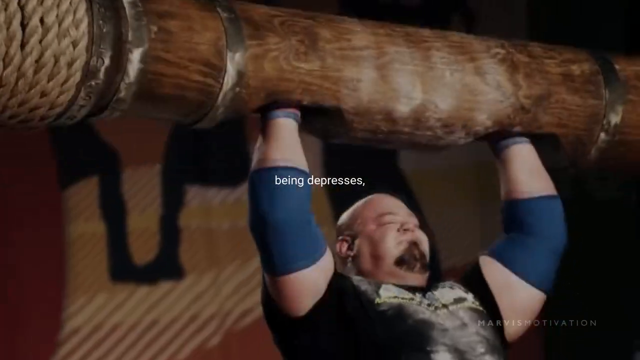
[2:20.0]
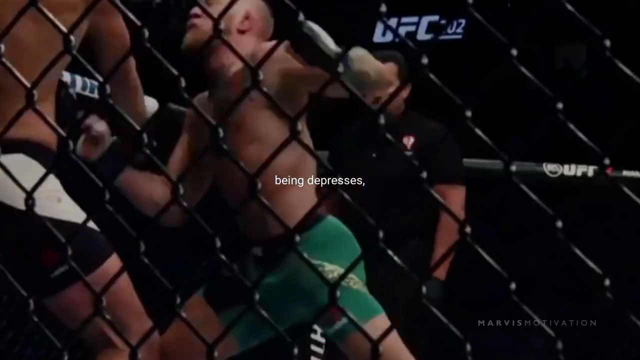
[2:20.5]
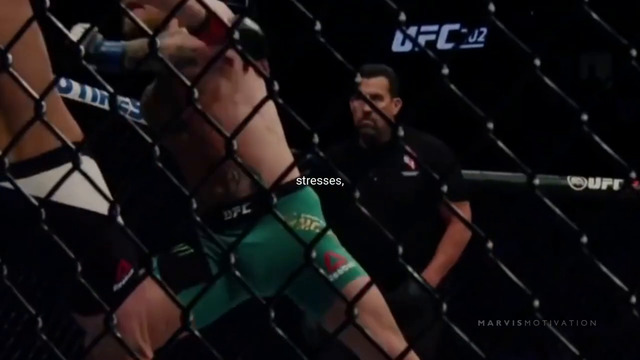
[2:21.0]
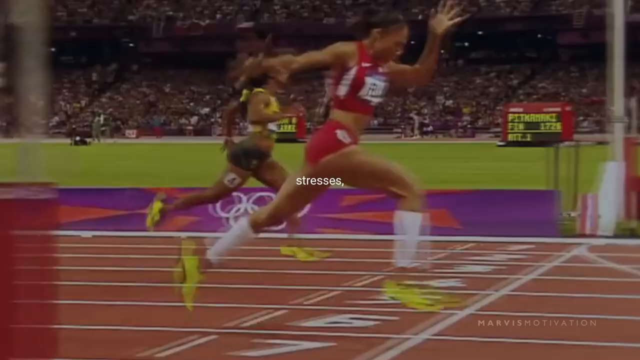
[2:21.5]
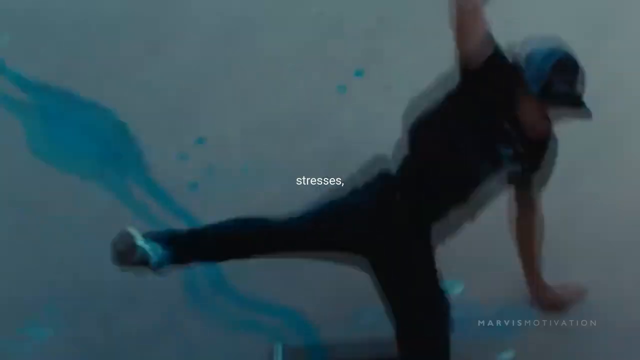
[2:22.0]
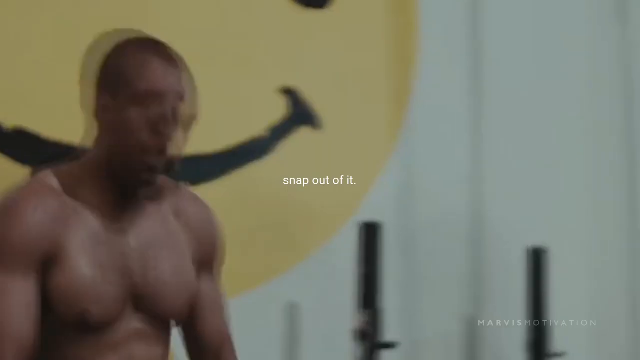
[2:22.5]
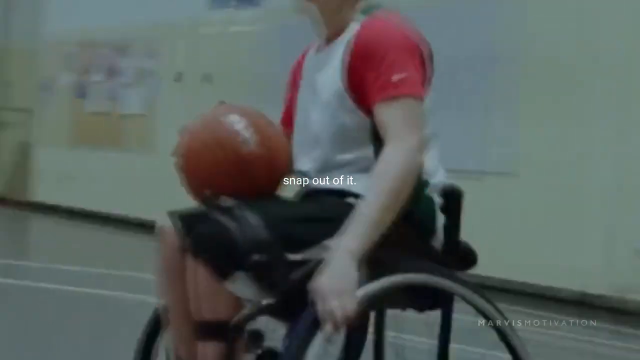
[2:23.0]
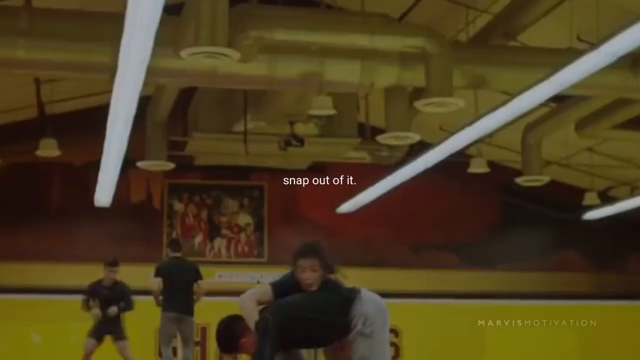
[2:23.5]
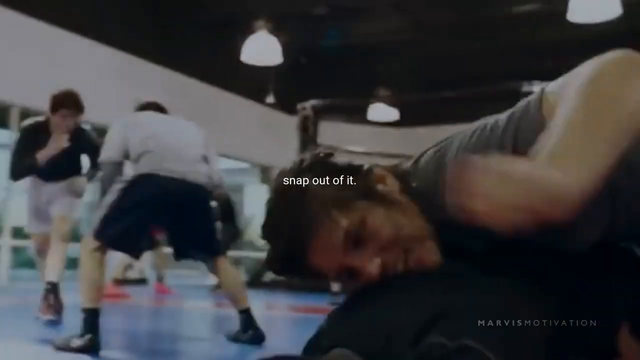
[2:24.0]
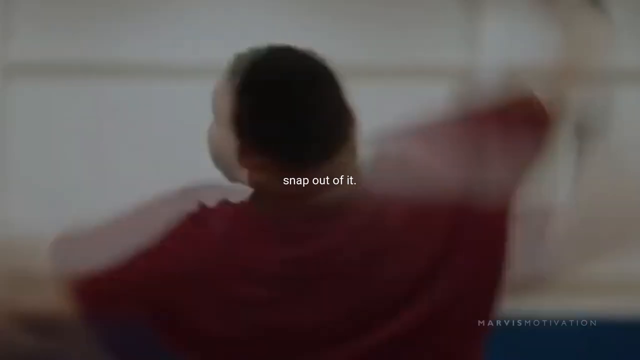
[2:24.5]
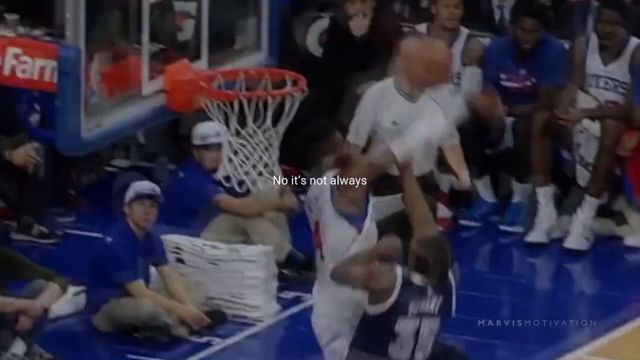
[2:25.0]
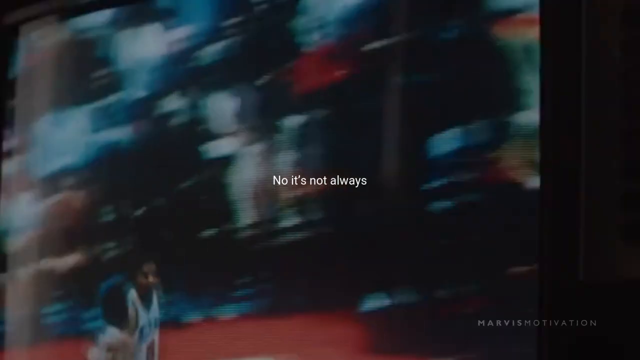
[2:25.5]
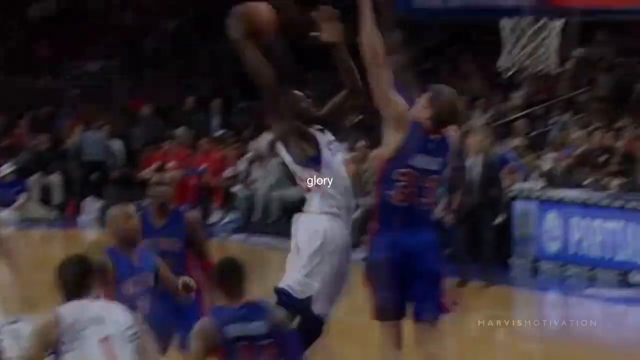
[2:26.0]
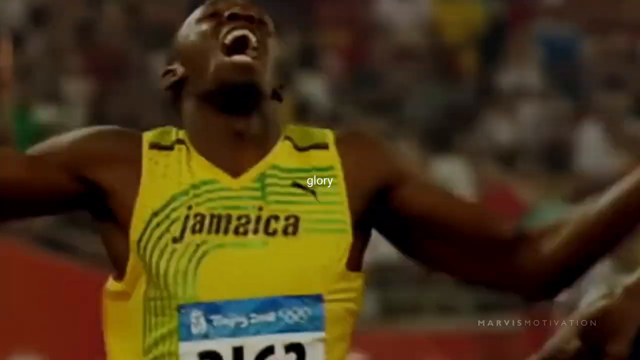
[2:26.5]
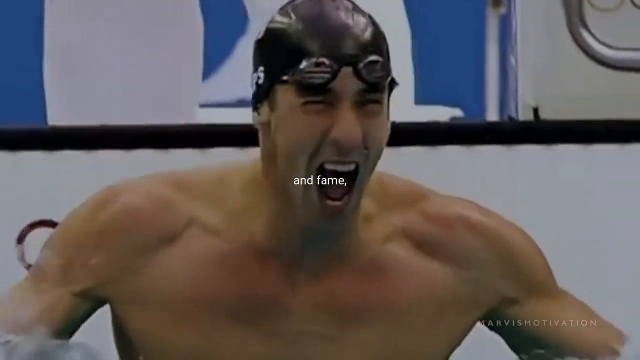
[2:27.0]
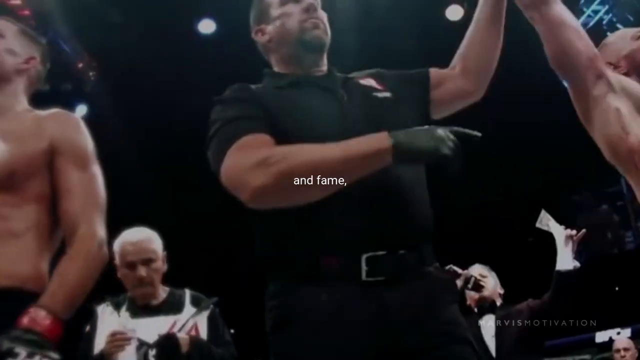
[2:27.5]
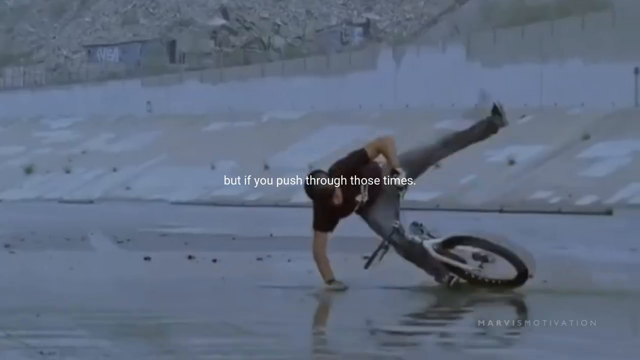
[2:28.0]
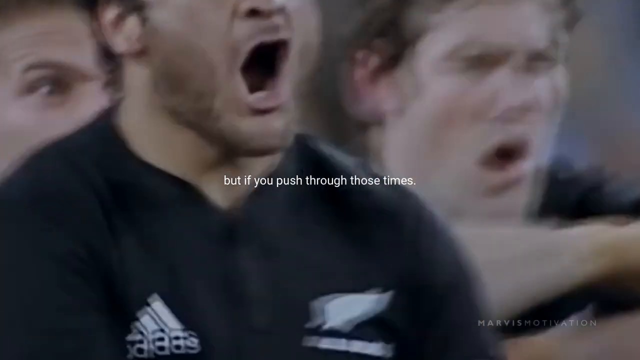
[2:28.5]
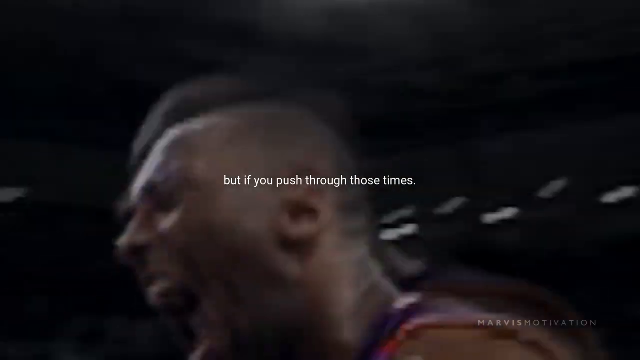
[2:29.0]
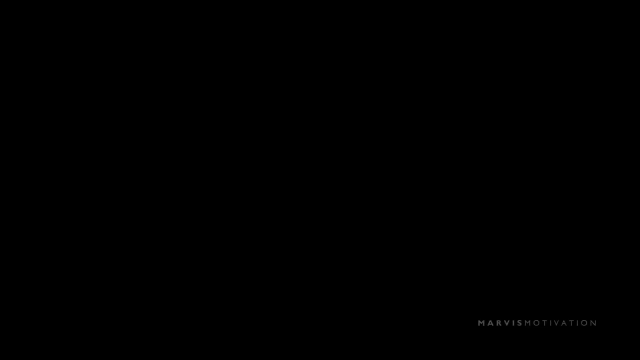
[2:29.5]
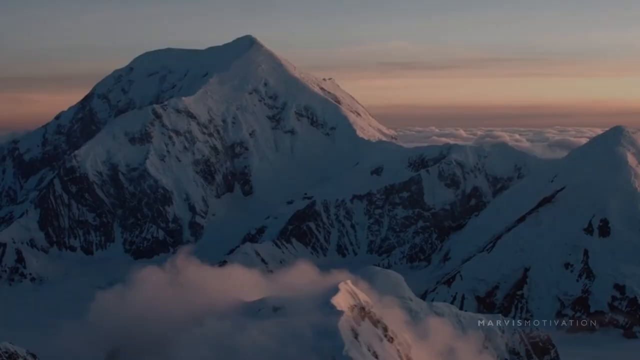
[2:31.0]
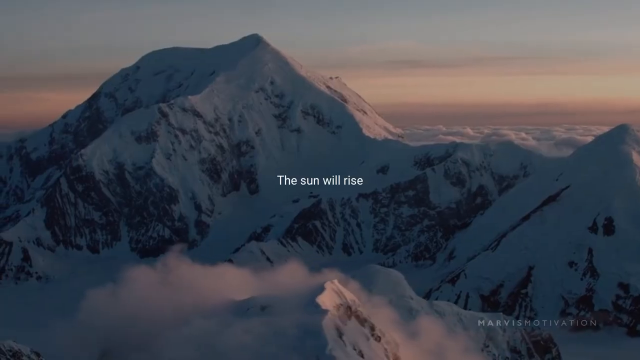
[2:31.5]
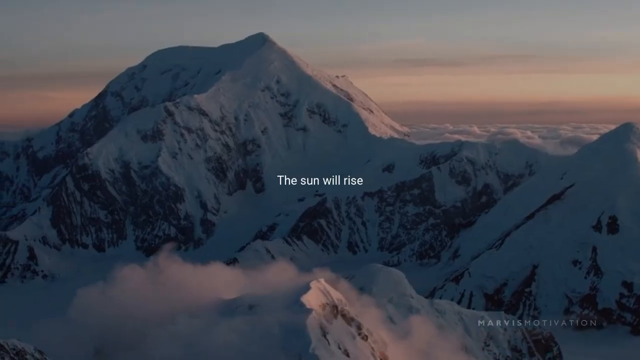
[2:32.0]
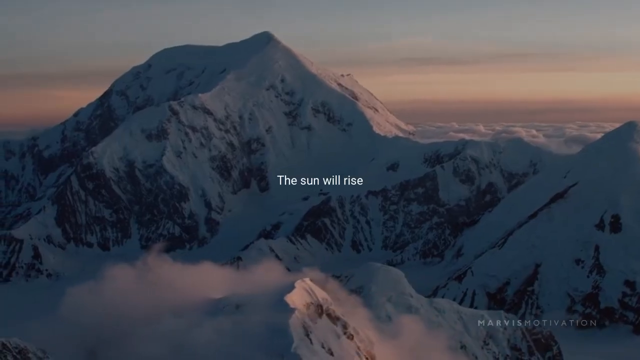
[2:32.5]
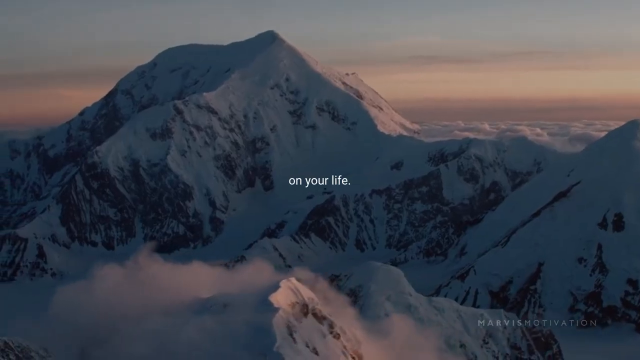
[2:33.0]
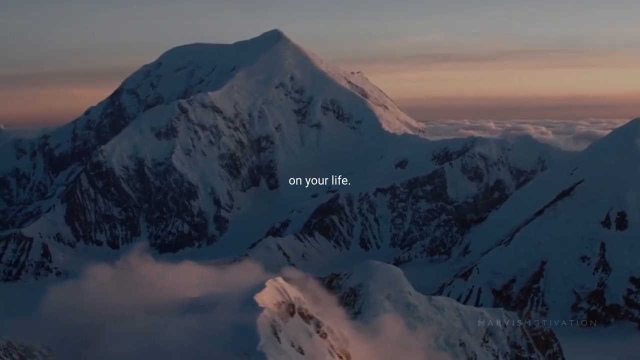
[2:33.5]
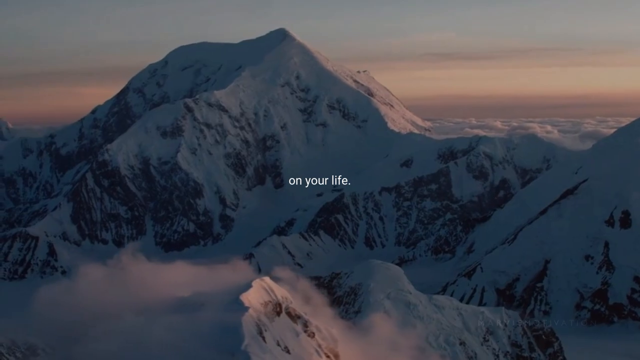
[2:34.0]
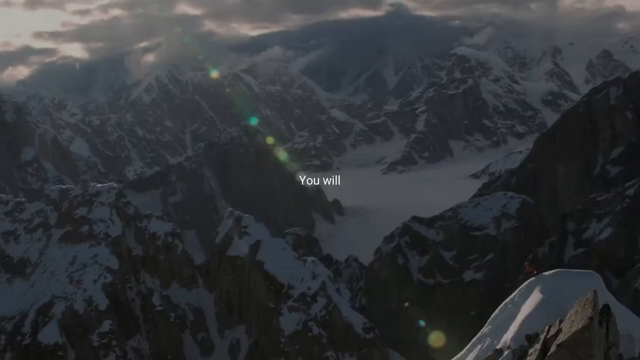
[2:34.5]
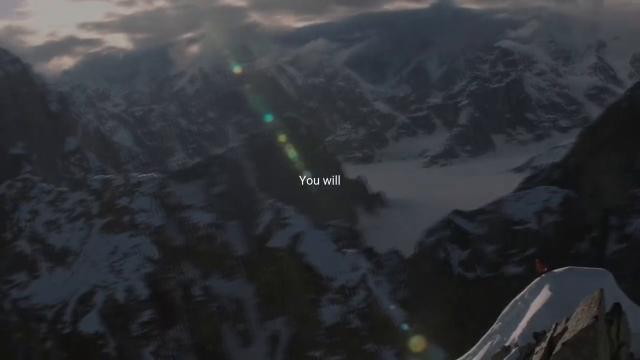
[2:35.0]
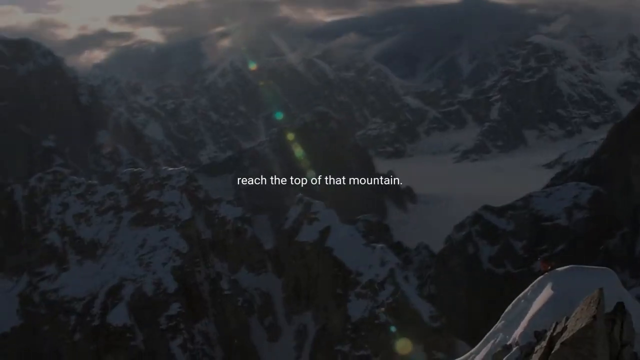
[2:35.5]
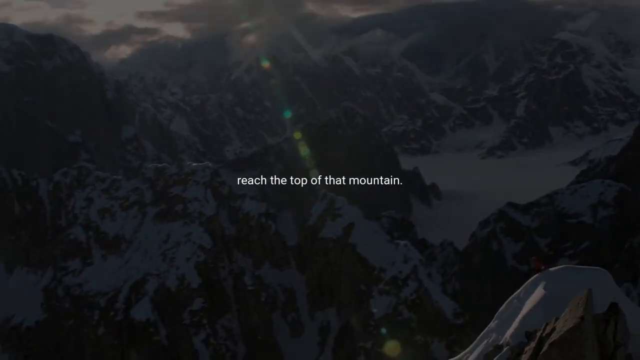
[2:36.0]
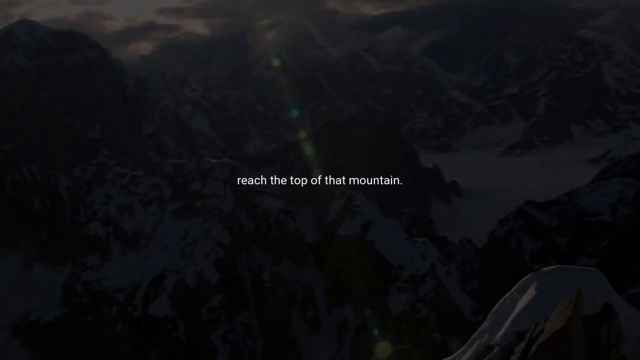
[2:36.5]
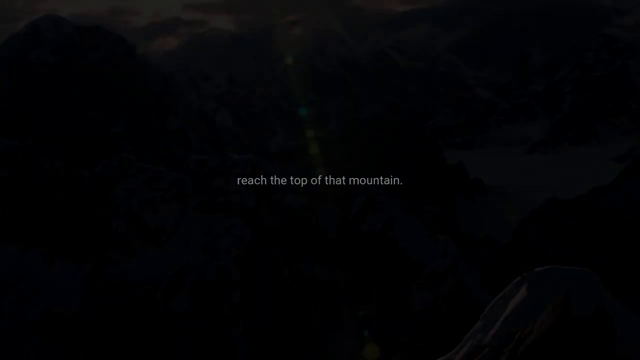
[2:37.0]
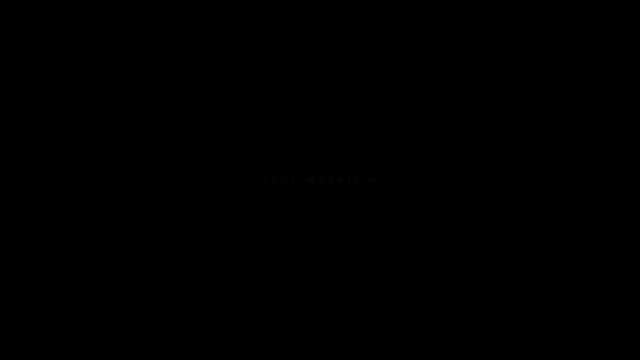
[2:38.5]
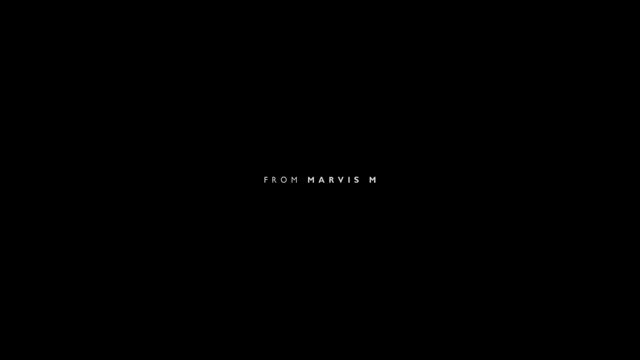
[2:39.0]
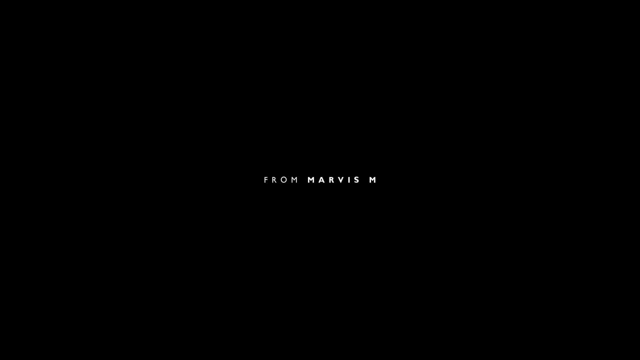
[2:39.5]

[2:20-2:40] A bald, very heavy man in a black shirt with a skull lifts a log, with blue bracers visible. The video transitions to a boxing/UFC ring, then a sort of Olympic running track, then a sort of Special Olympics scene with text reading "snap out of it." Basketball players from two different teams appear in an intense game, and the text "glory" appears as a basketball player dunks. Further scenes show a runner with "glory," a swimmer, and a referee lifting the hand of one of the UFC fighters. Text reads "and fame," then a person on a bike slips with white text reading "But if you push through those times." Kobe Bryant appears in a sort of NBA environment, followed by a mountain environment with text reading "the sun will rise on your life" and more text reading "you will reach the top of the mountain." The video then transitions to a background that reads "for" and "Marvis M."